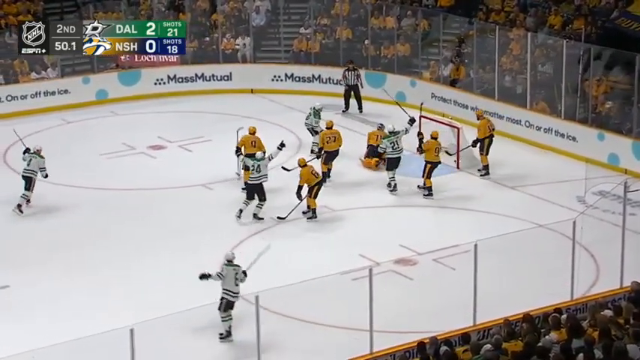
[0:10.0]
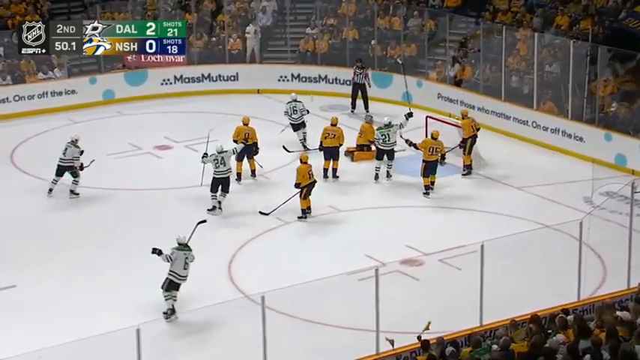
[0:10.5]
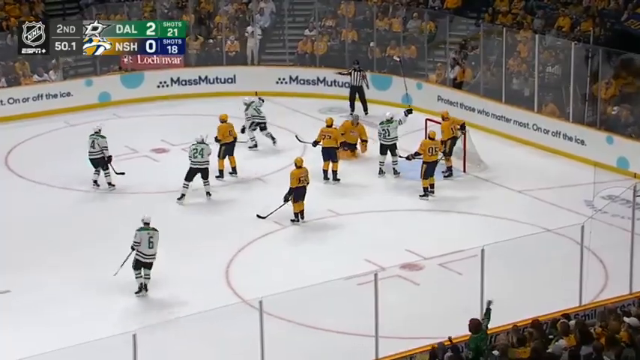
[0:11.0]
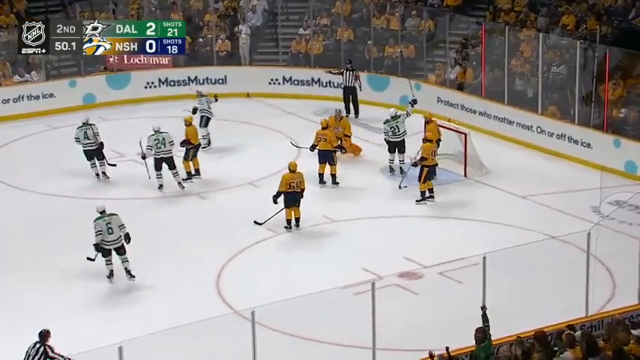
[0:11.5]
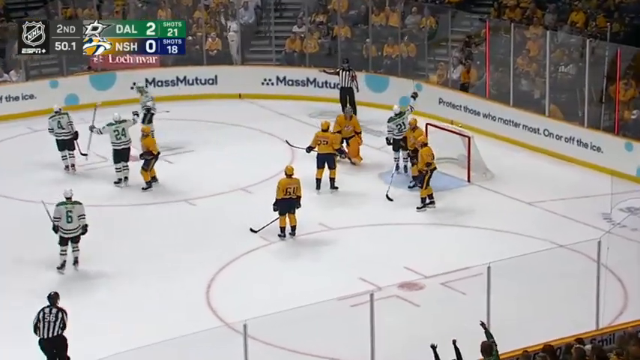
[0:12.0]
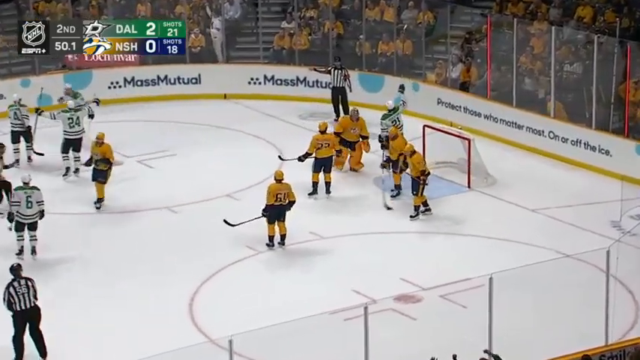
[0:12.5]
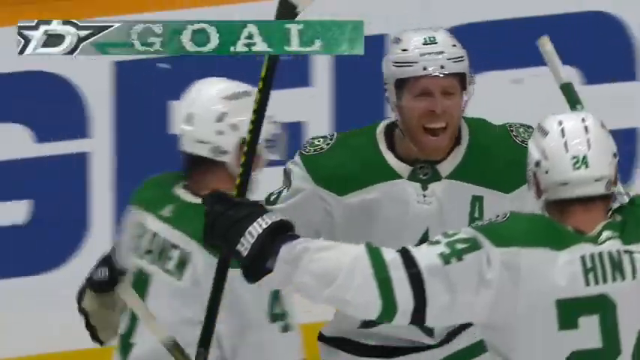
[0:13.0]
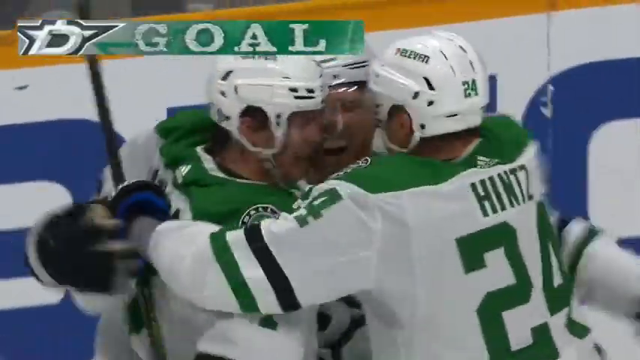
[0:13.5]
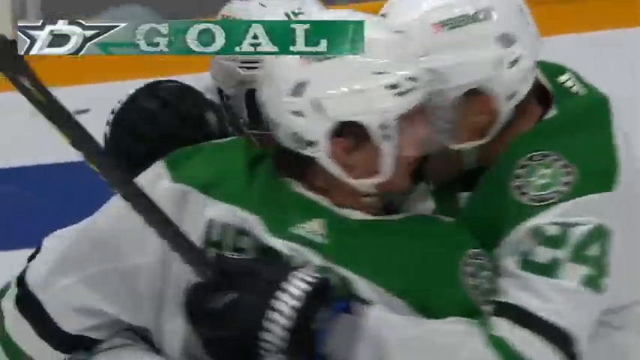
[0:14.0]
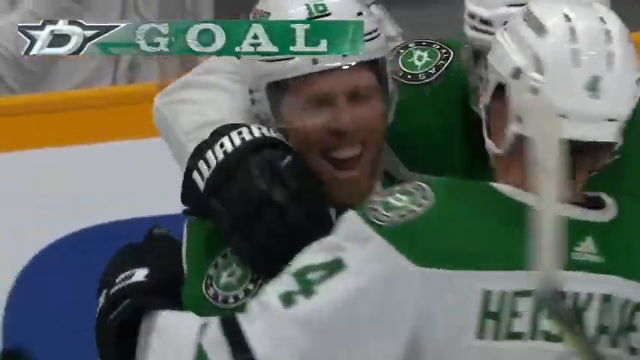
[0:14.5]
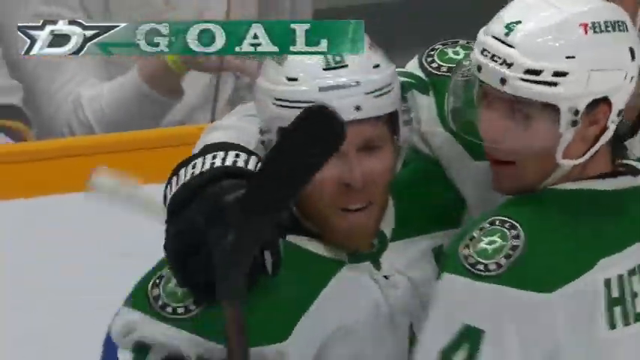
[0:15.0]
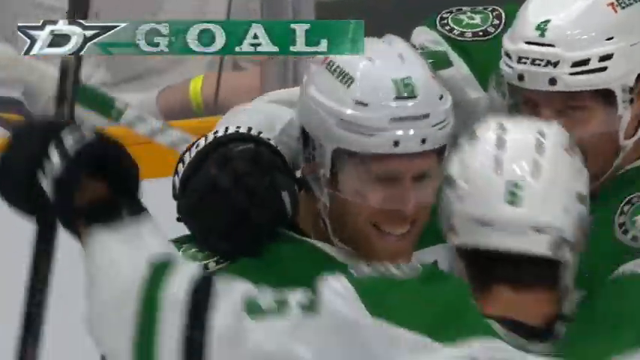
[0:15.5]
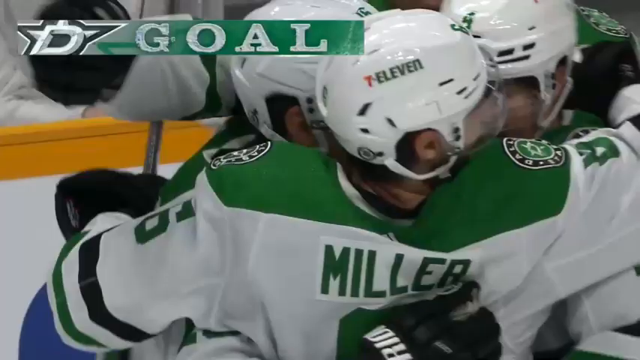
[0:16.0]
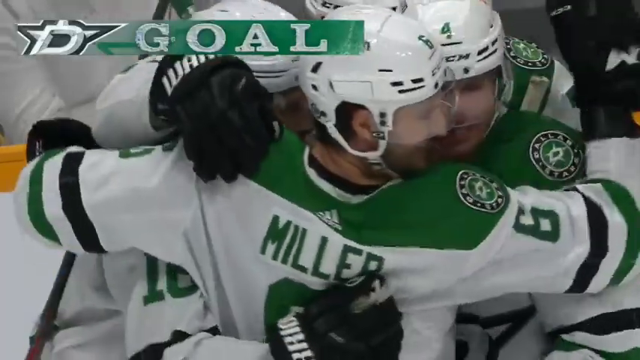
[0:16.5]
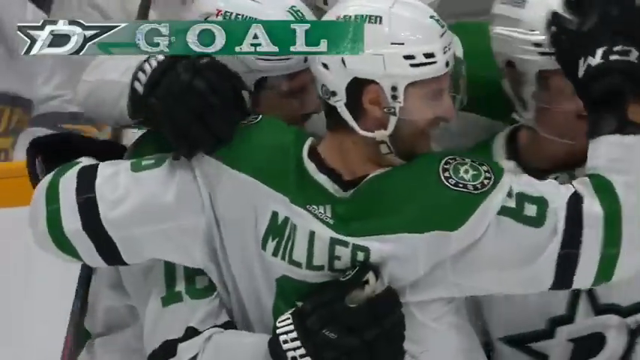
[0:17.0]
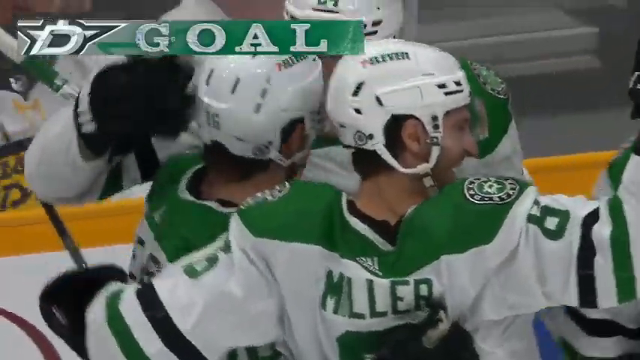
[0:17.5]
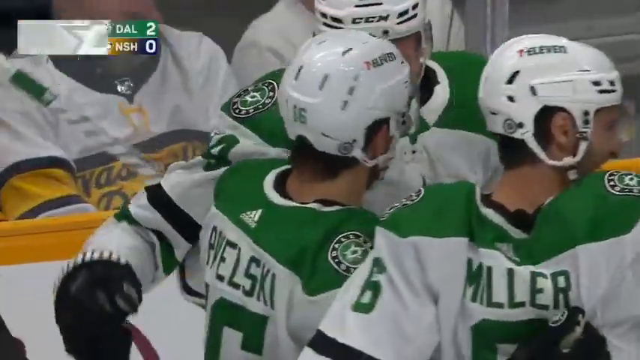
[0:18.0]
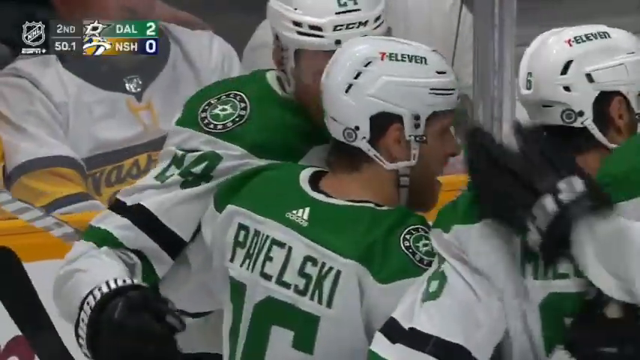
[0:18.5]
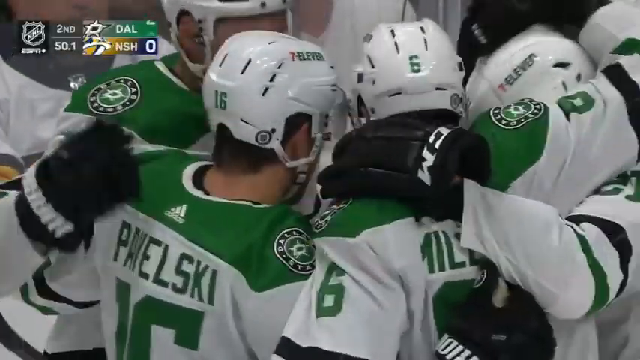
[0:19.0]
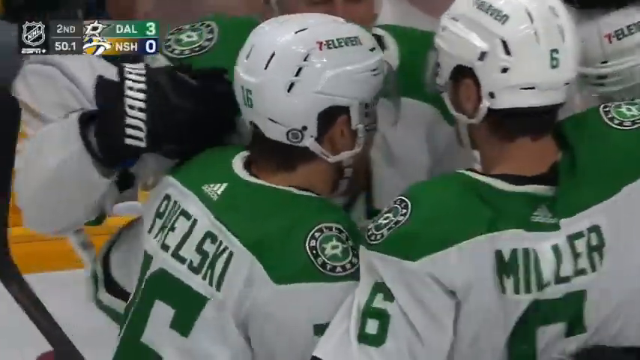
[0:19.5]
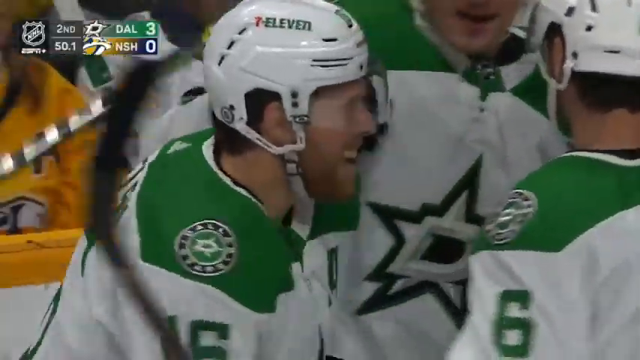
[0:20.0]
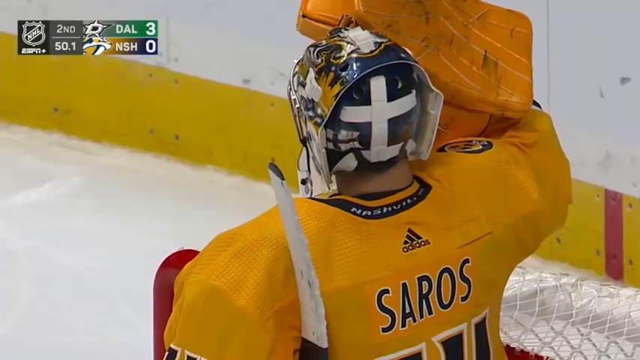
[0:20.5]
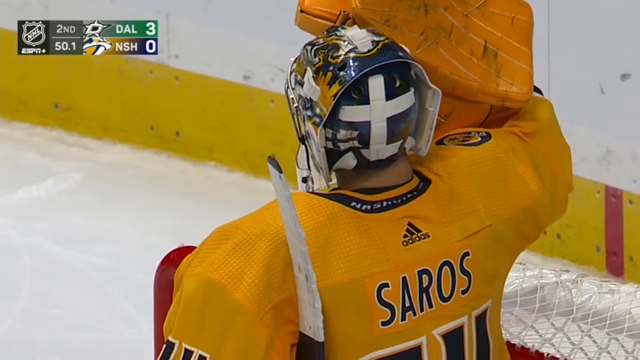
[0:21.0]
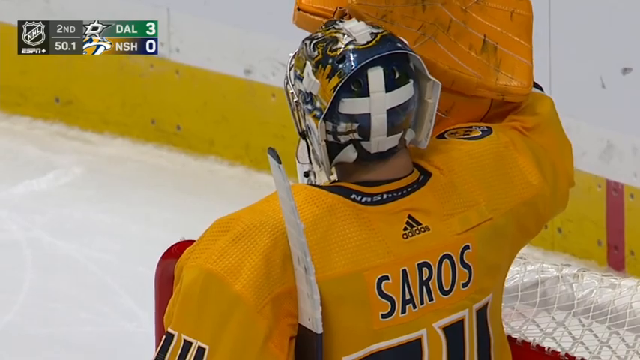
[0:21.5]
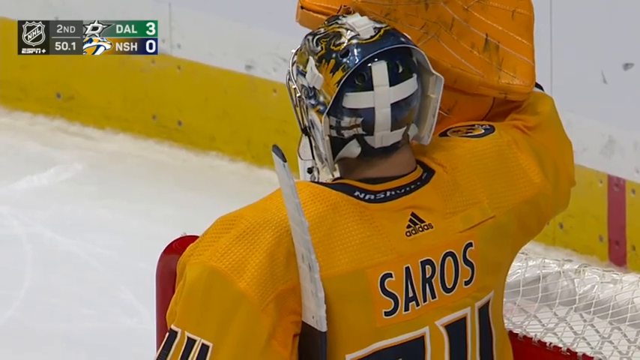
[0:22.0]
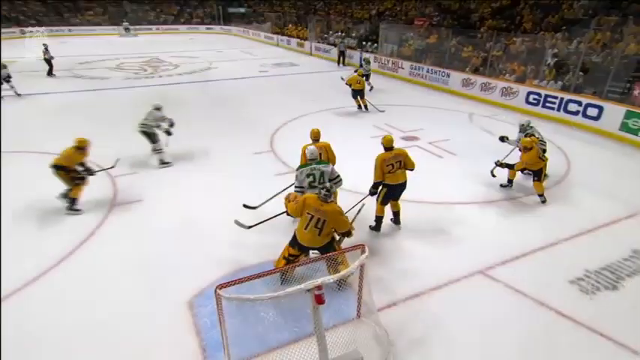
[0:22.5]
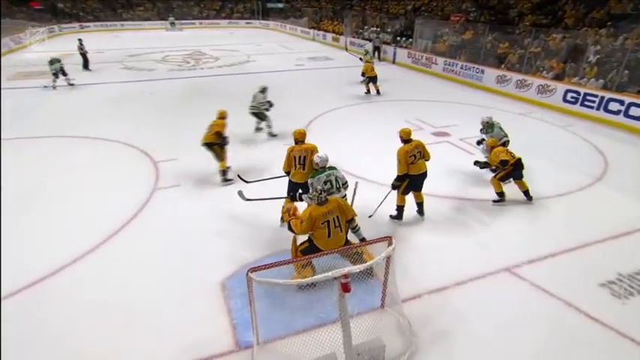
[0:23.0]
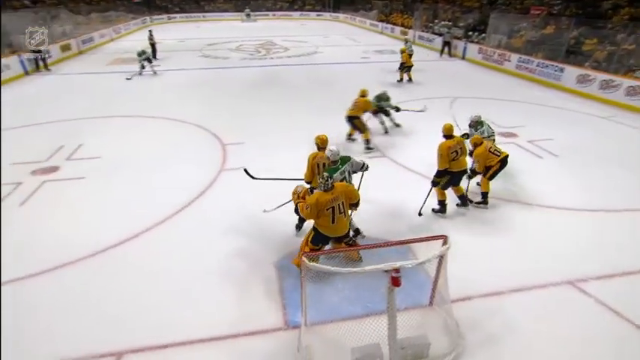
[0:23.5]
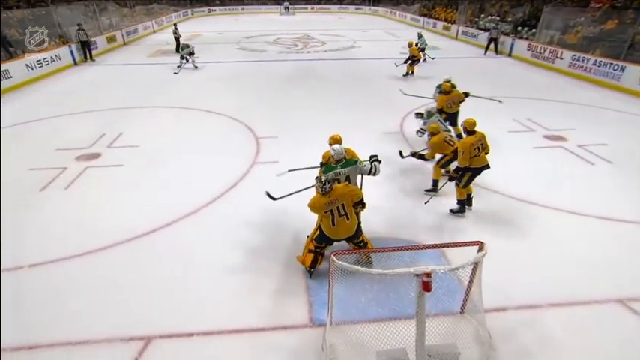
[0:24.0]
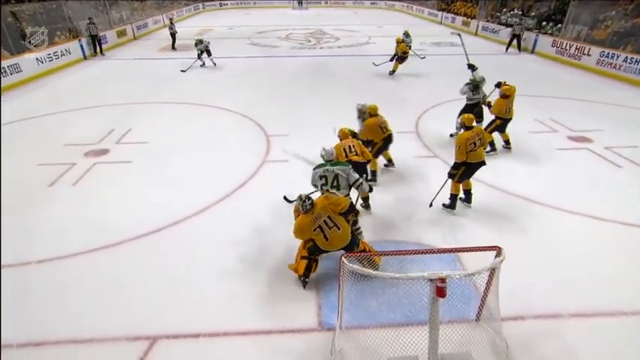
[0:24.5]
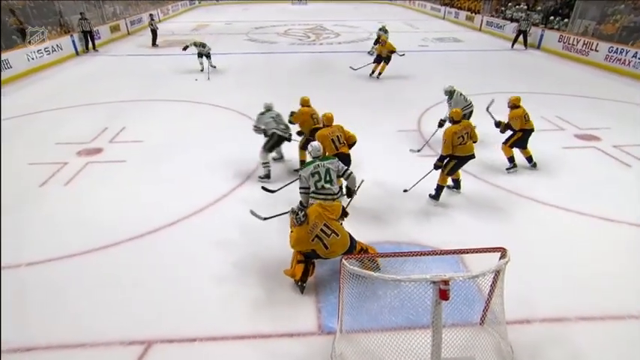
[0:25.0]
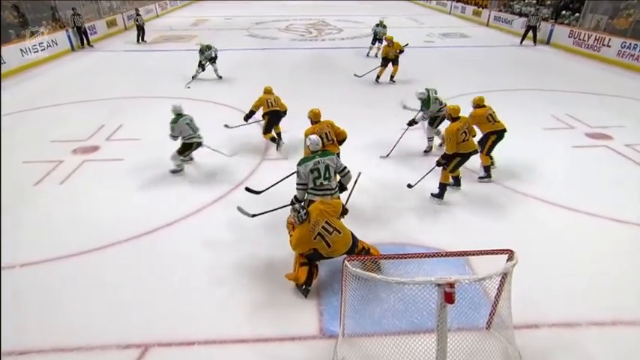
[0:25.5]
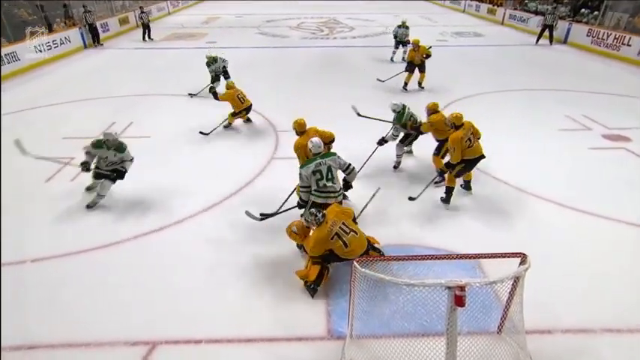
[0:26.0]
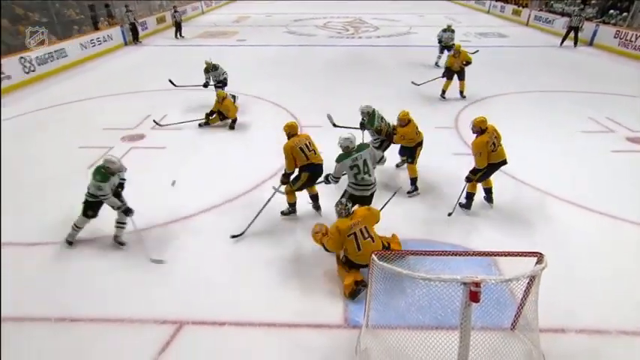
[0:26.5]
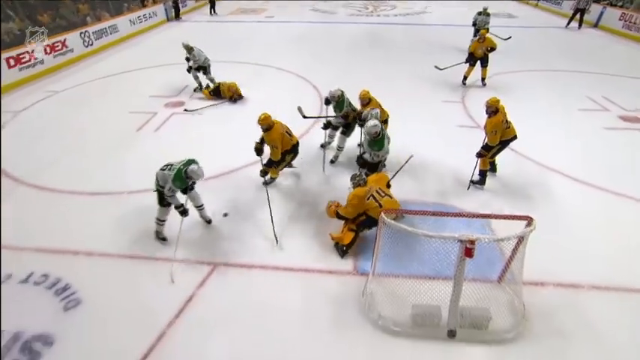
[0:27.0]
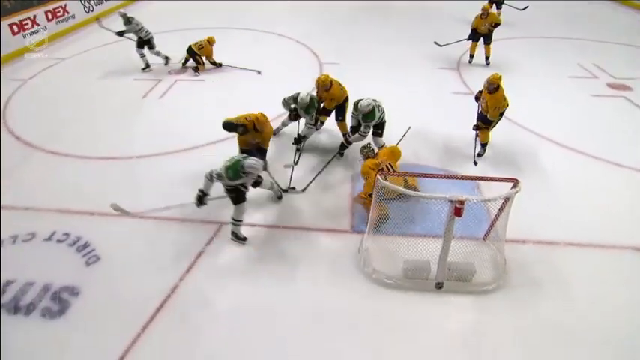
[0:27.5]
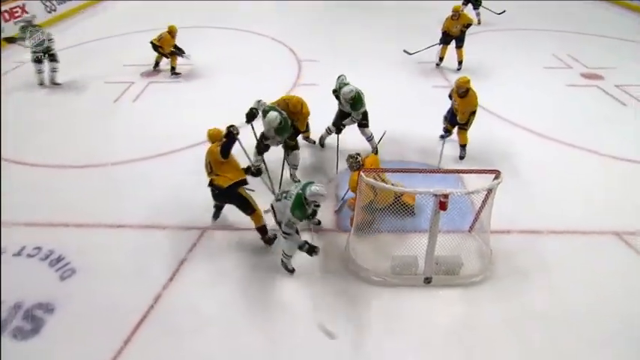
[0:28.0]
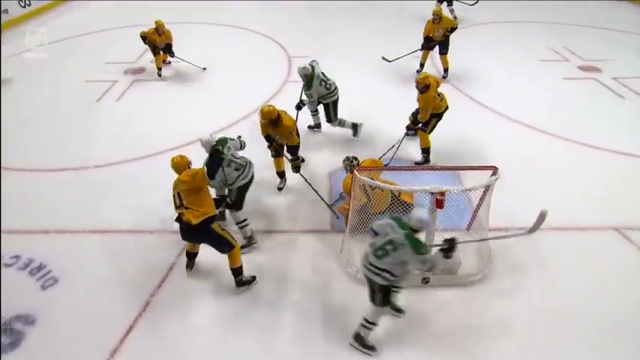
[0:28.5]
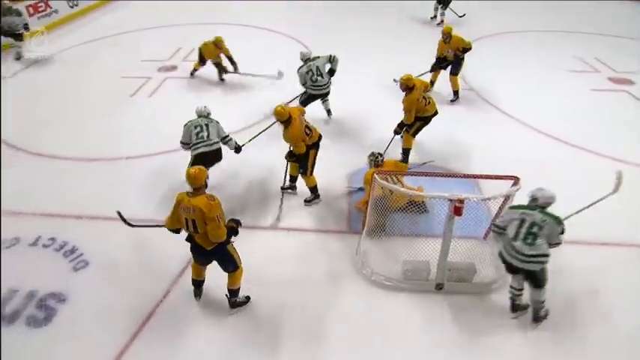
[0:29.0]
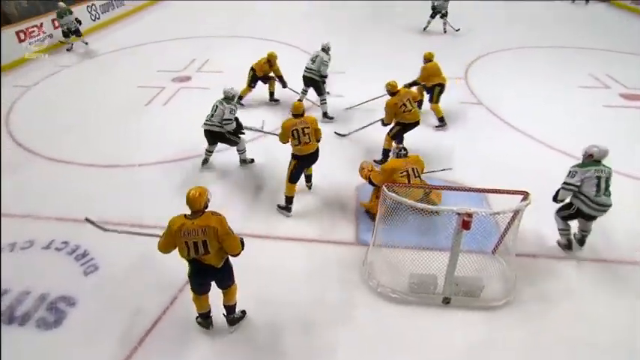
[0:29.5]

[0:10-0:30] The players appear to be ice skating professionally. A man with a mask is standing there. In the middle, it looks like they are about to dance, as one of them kind of takes off. After they celebrate hitting him, there are three of them, maybe four or five.